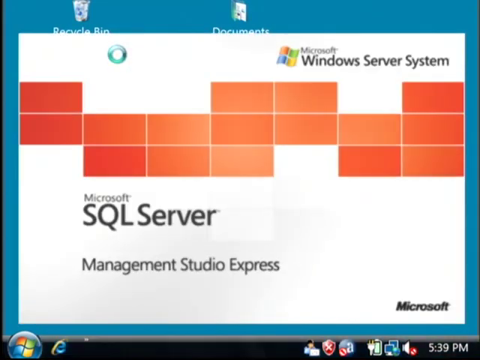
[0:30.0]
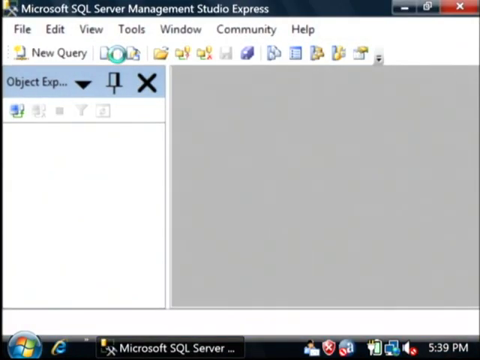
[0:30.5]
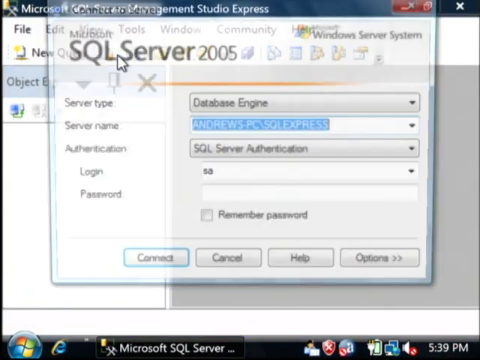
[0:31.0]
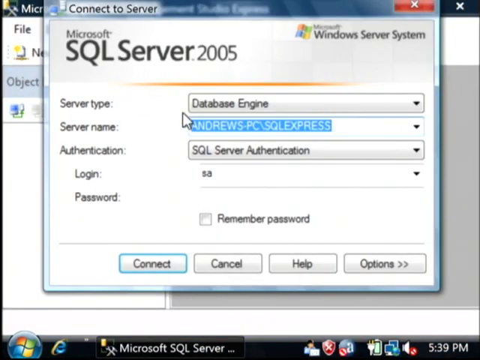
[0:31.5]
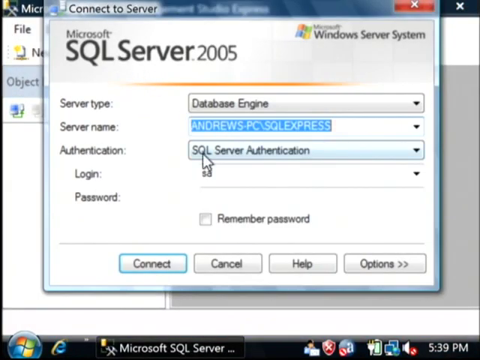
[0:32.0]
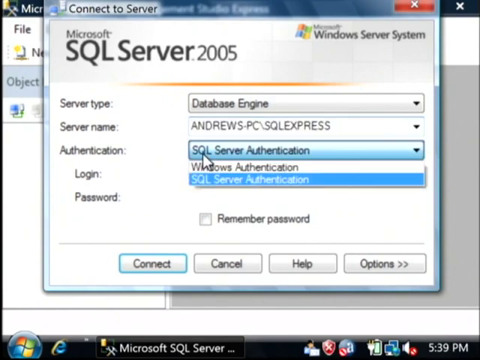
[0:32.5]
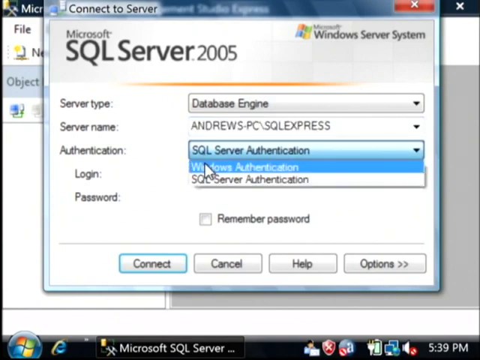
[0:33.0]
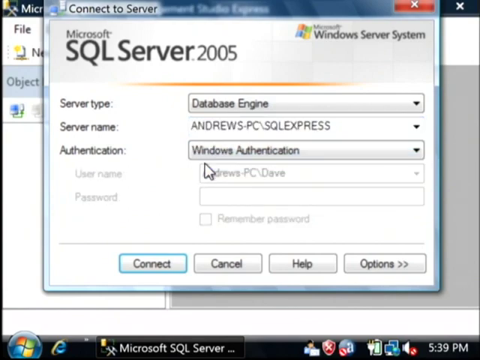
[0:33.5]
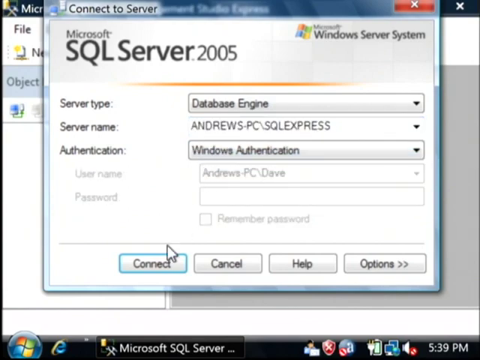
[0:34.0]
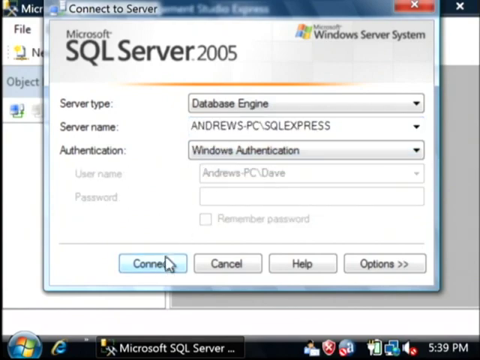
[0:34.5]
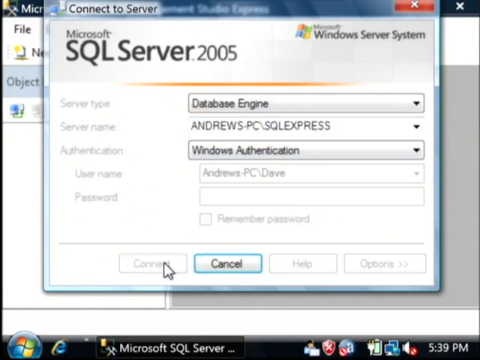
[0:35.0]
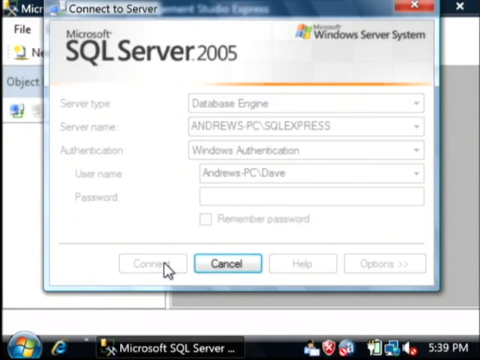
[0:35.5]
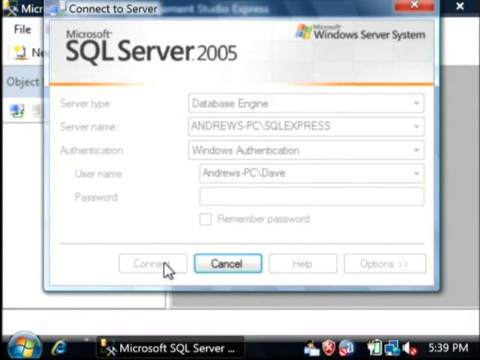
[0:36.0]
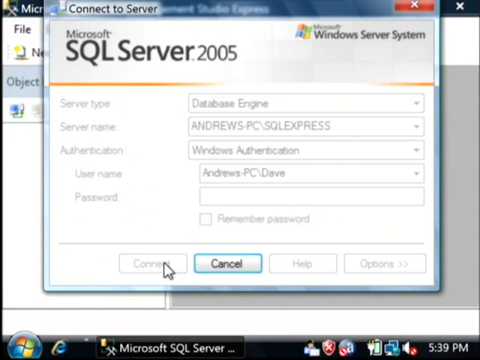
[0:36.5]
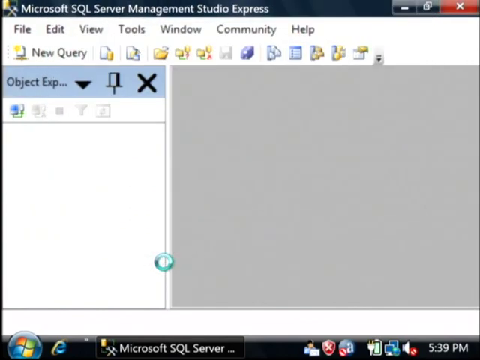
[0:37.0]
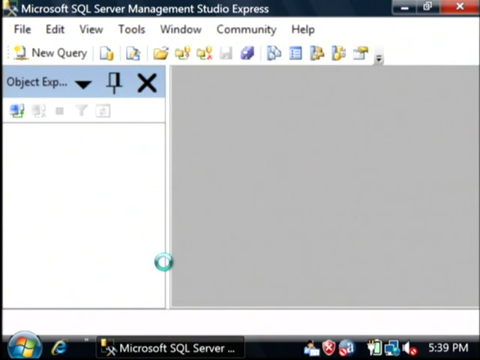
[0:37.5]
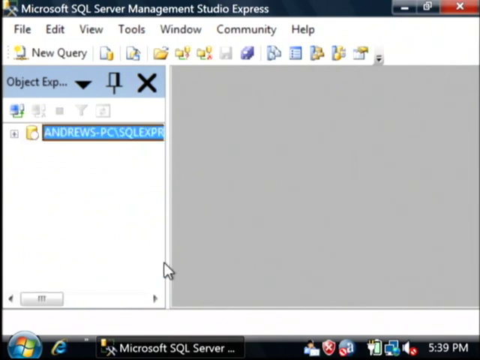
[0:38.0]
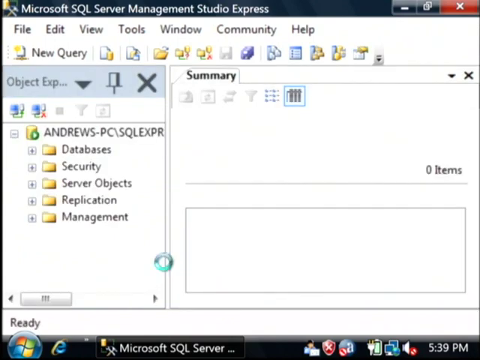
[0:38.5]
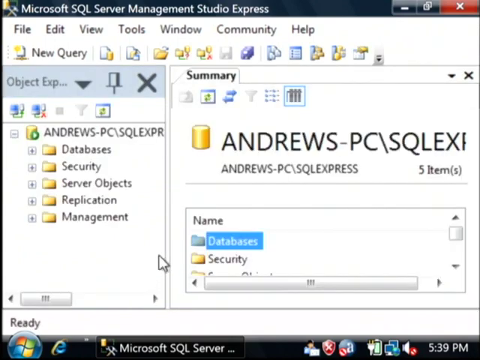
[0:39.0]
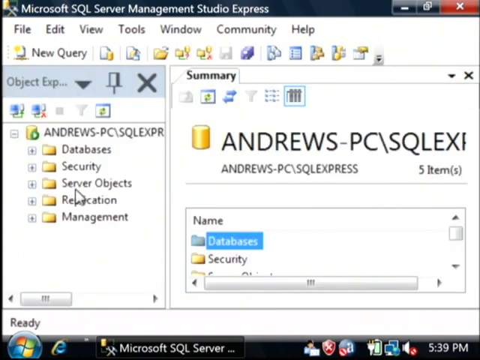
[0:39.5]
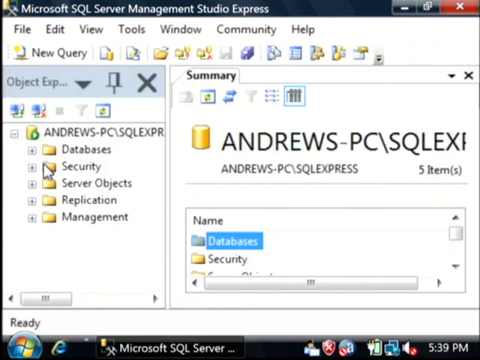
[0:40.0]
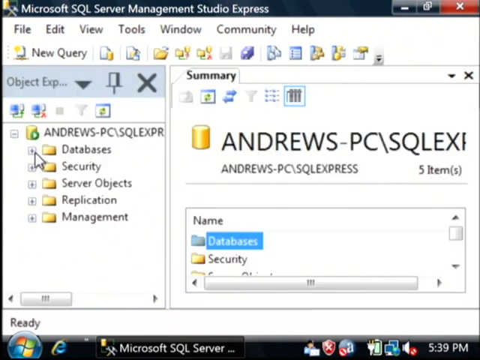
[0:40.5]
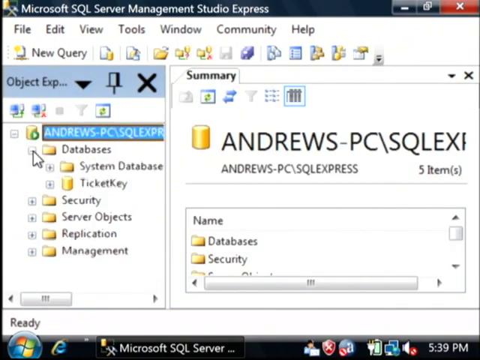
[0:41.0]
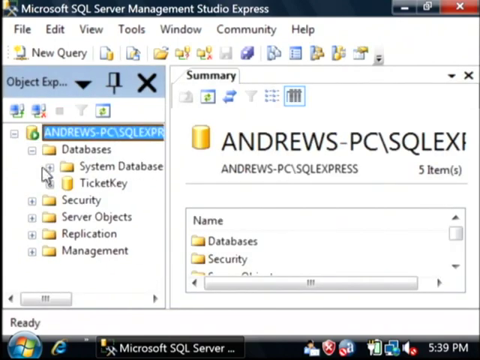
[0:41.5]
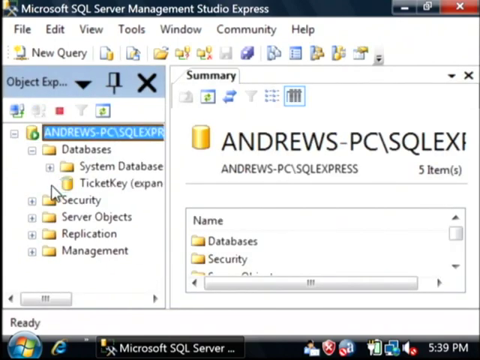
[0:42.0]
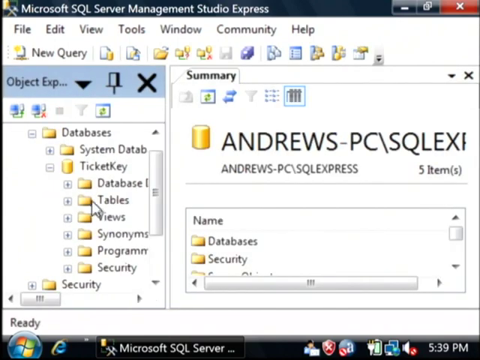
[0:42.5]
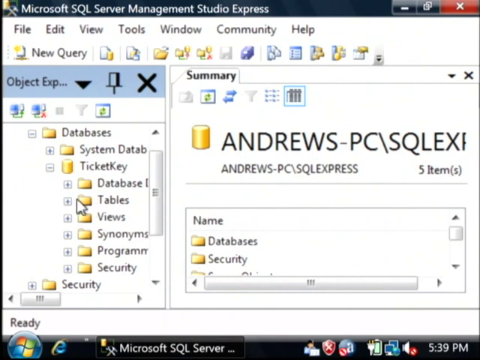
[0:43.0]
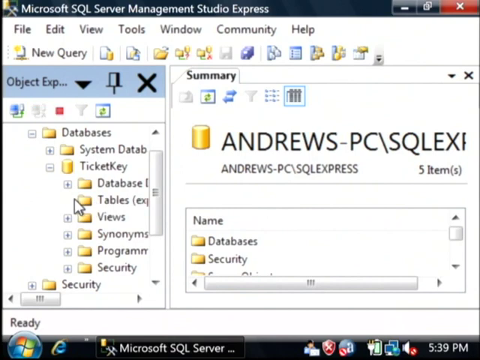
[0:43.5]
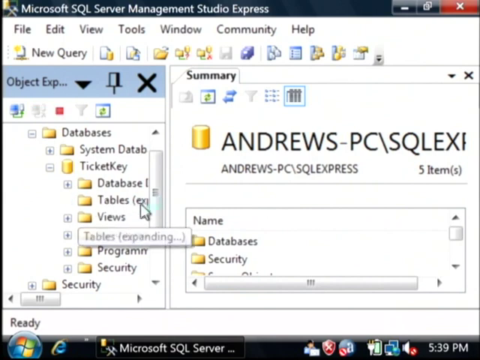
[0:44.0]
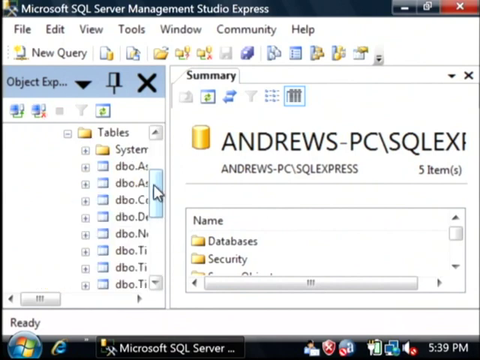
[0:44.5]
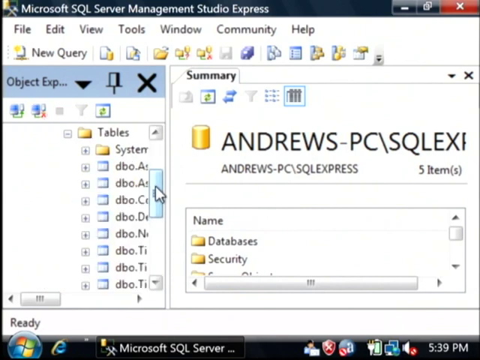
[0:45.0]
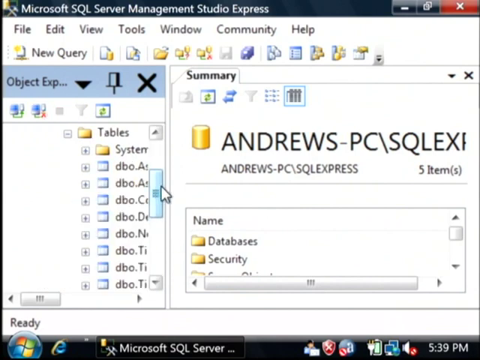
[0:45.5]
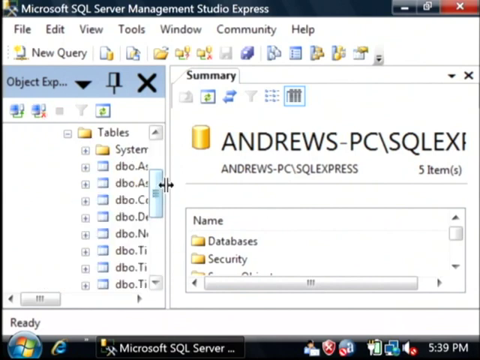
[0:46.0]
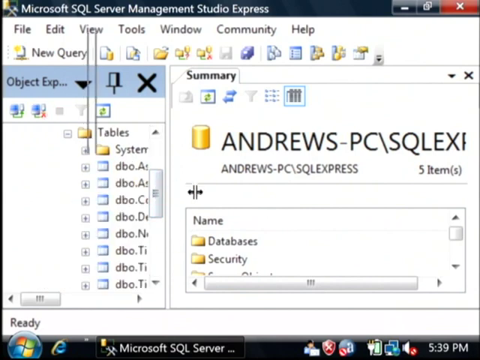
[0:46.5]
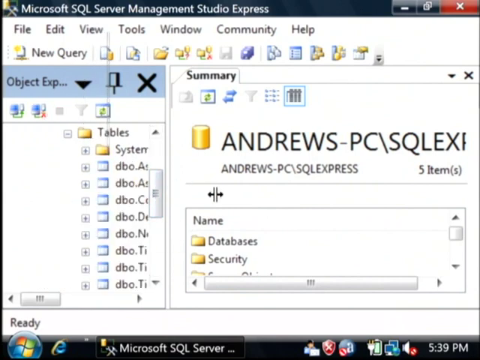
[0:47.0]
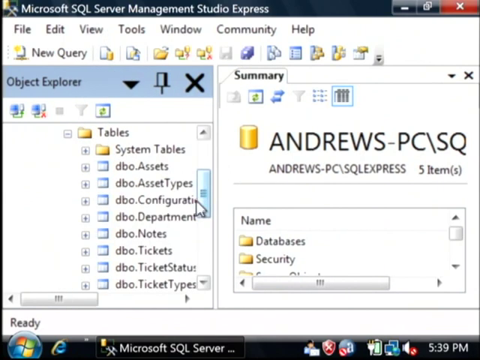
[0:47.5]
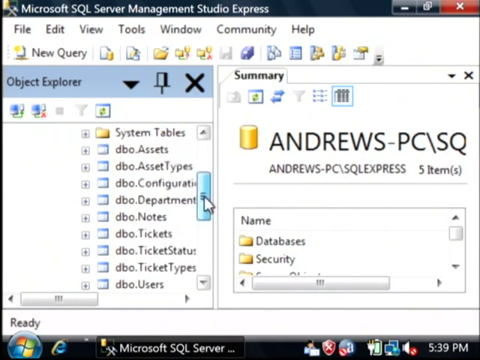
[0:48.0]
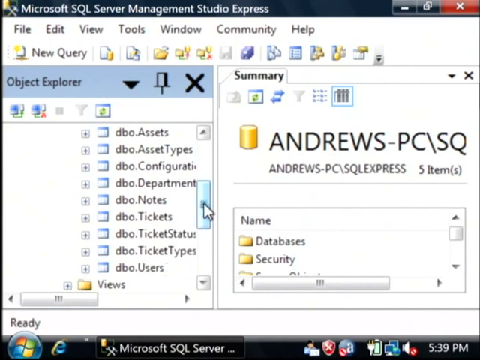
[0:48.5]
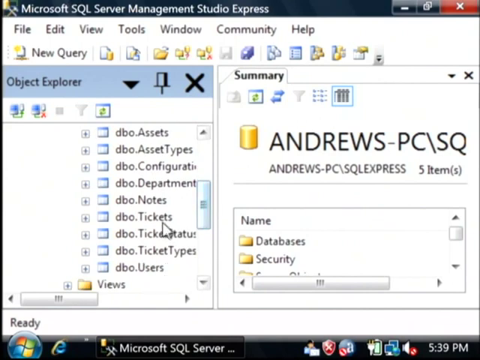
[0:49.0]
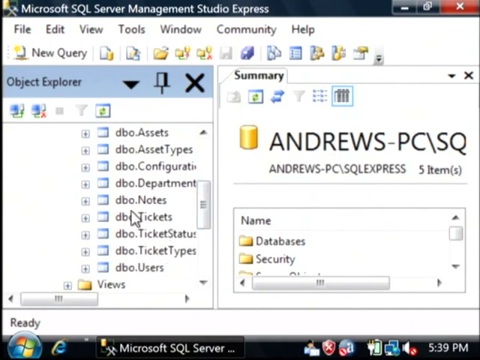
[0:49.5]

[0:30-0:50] A computer screen shows a Windows desktop background with a window overlaid on it as the user interacts with the computer. The window is opening the application Microsoft SQL Server. When the application opens, a pop-up appears asking the user to connect to a server, with three options as well as a login and password. The user selects the authentication drop-down and chooses Windows authentication; the server type, database engine and server name stay the same. The cursor moves to the bottom left part of the pop-up window and clicks the connect button. The pop-up disappears and the application loads the connection. The user navigates to the left-hand menu pane, selects the databases folder and expands it using the little X, then expands the ticket key folder and the systems tables. The user then drags the right side of the left pane to make it bigger so all of the names of the databases can be read.